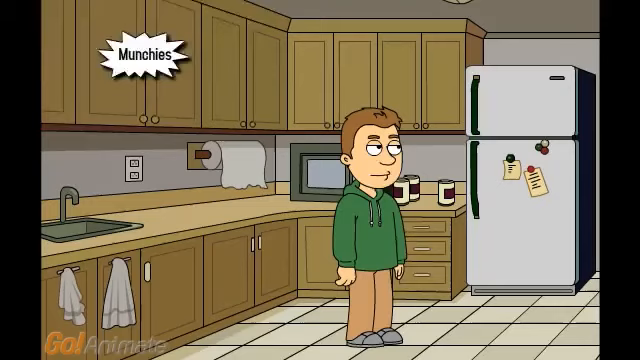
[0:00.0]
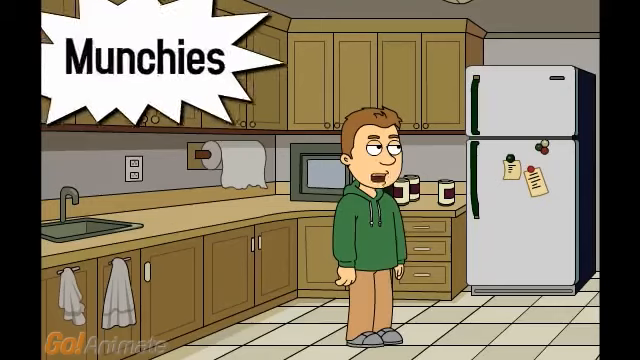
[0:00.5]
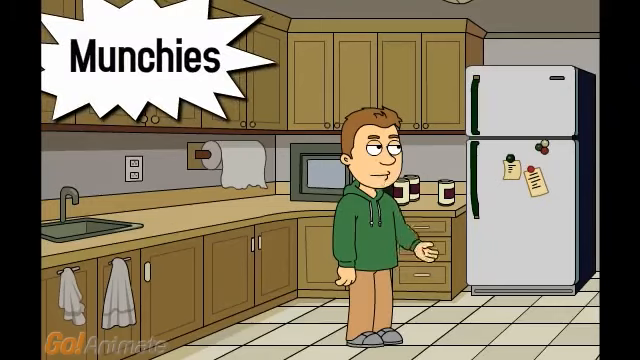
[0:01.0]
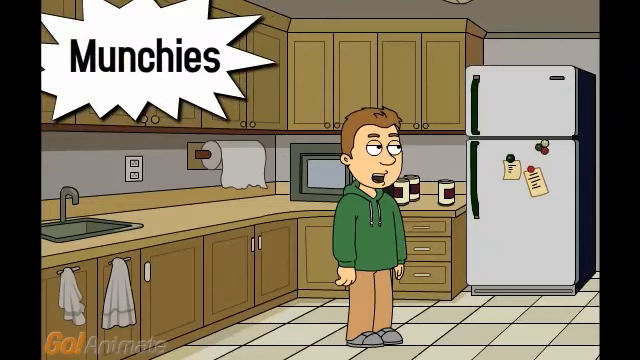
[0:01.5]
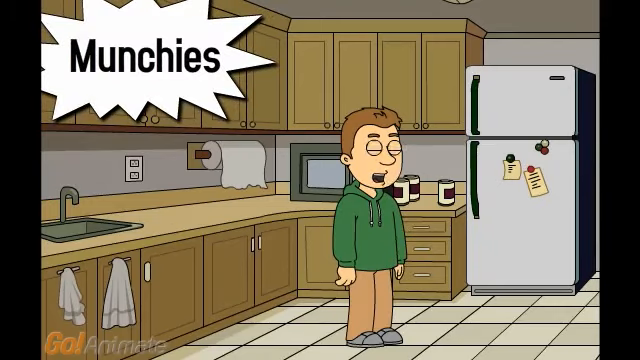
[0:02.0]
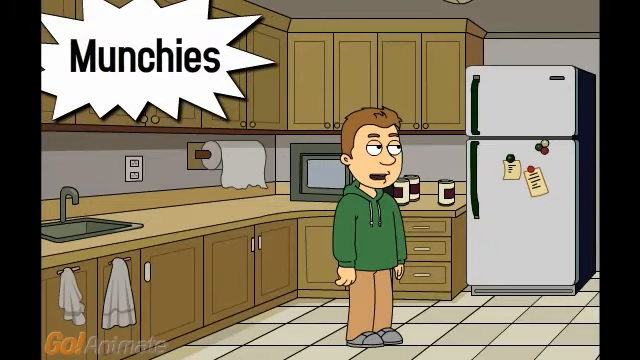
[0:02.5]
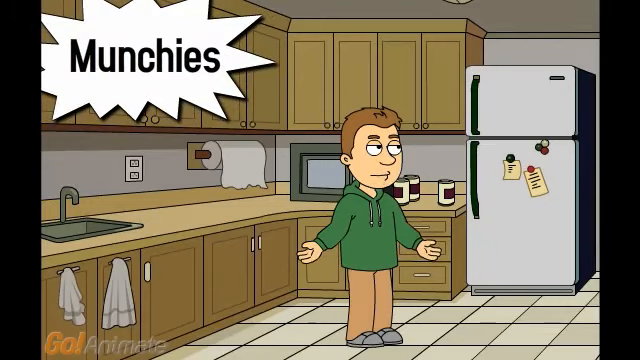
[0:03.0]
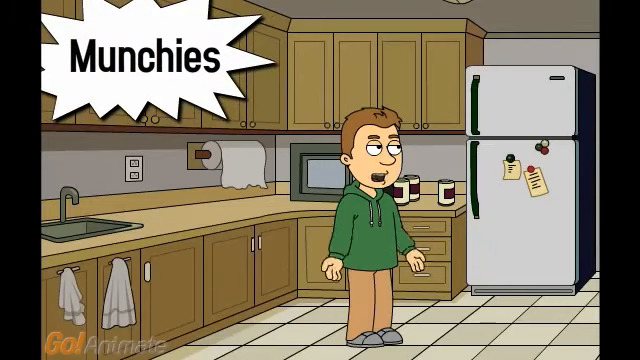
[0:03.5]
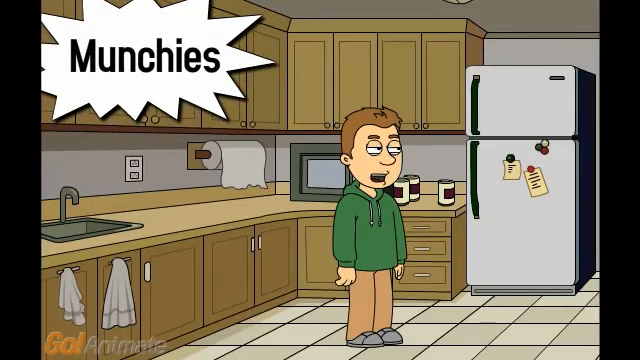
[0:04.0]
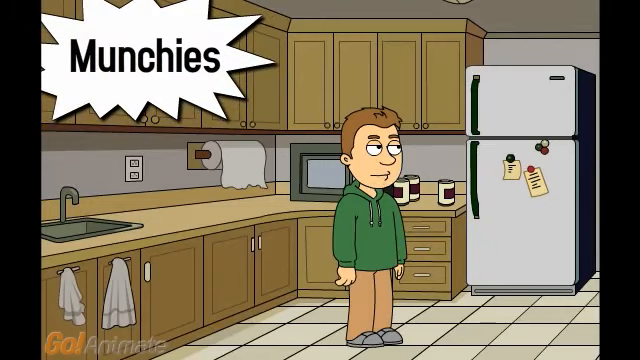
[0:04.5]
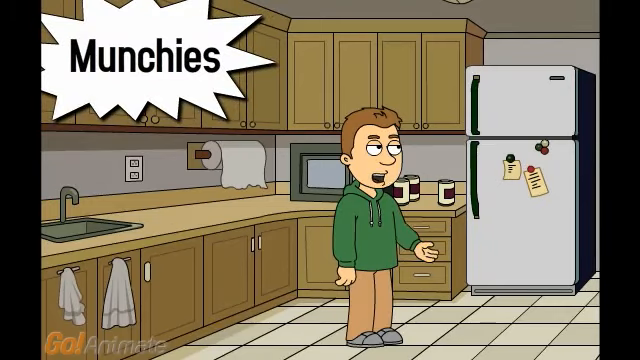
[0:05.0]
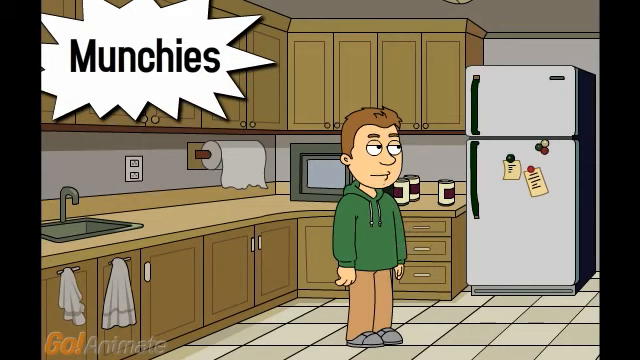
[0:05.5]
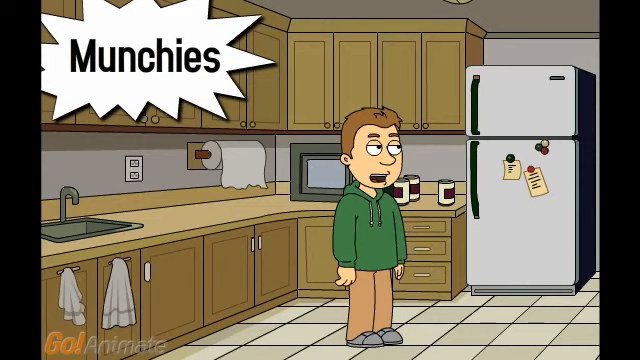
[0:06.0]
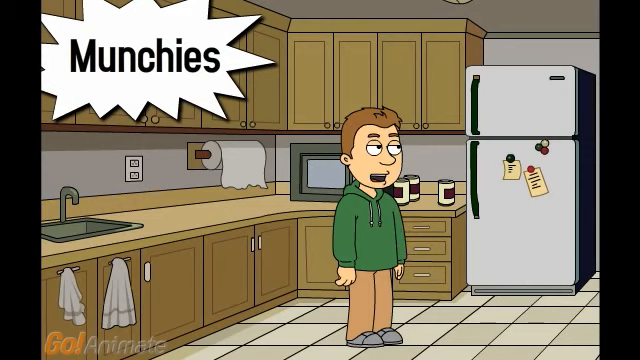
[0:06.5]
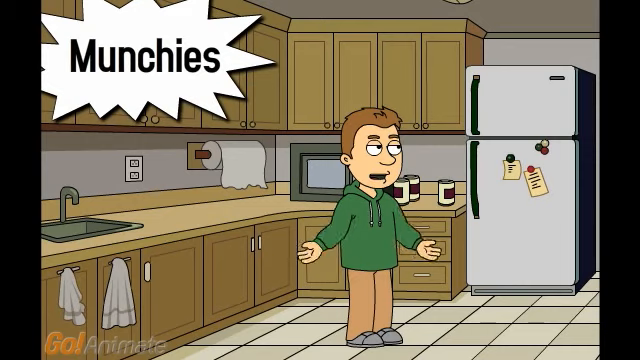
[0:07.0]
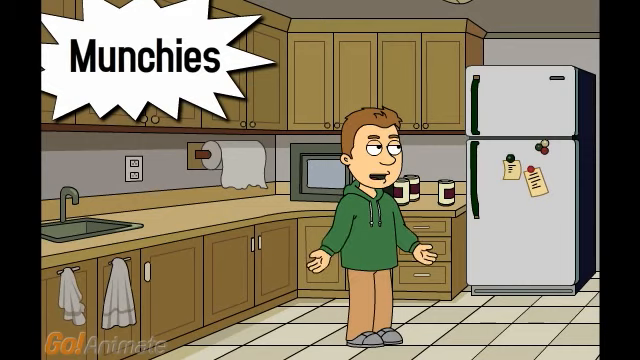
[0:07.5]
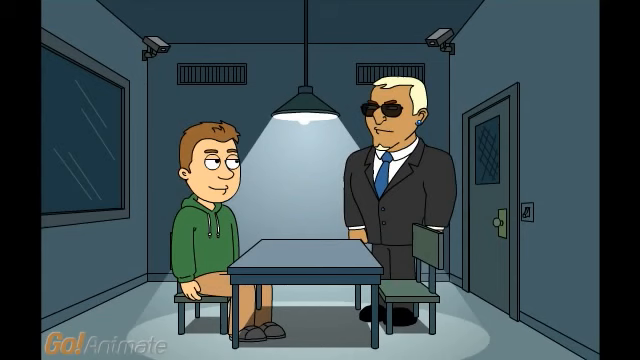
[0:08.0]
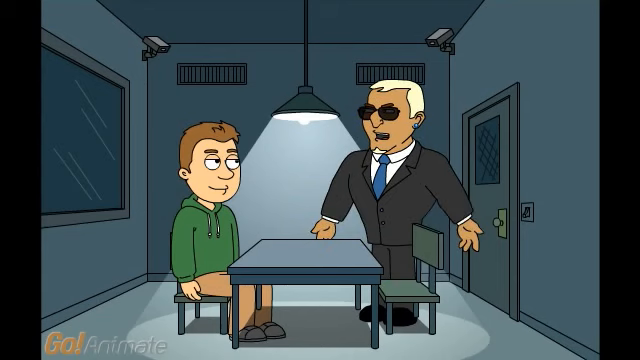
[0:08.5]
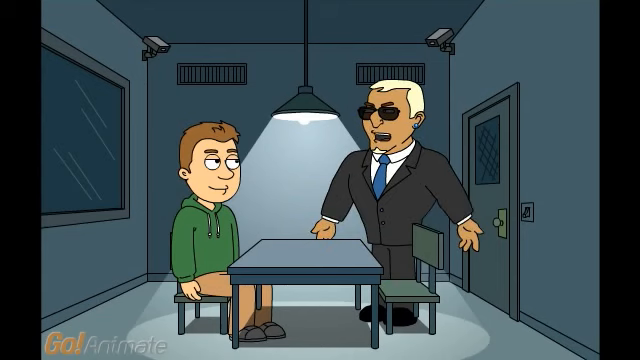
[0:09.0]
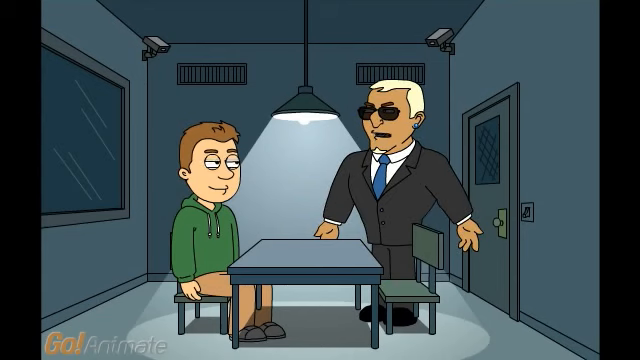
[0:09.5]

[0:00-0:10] A young boy is with a gentleman in a black suit. The boy wears a green pullover and a brown jacket. The kitchen has a double-door fridge, kitchen cabinets, cups, a microwave, a sink, and tissues on the drawer. The boy is at the kitchen staring at something, his eyes bulging, and it is unclear what he is expecting.